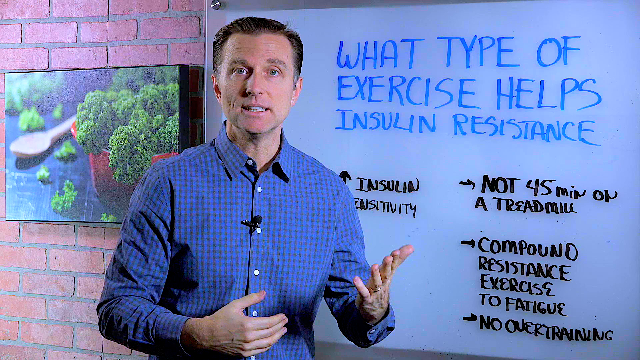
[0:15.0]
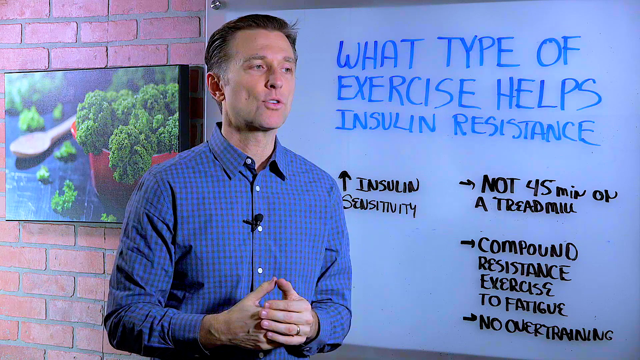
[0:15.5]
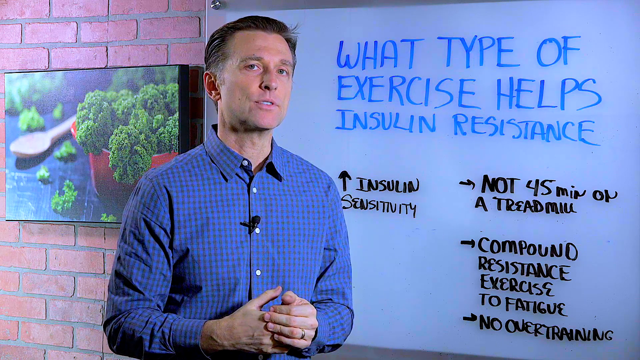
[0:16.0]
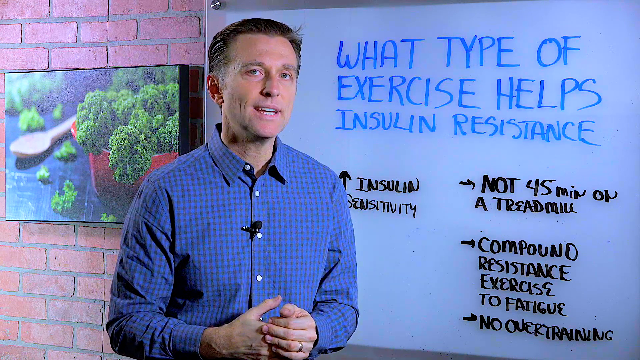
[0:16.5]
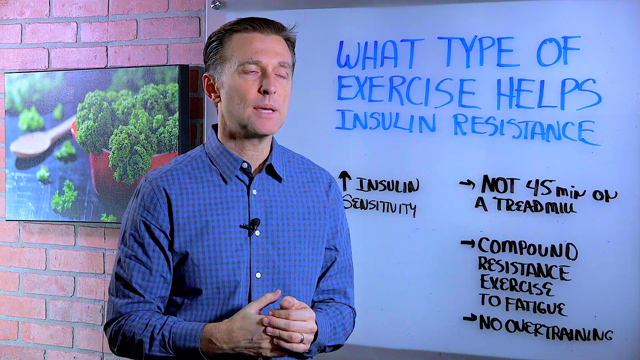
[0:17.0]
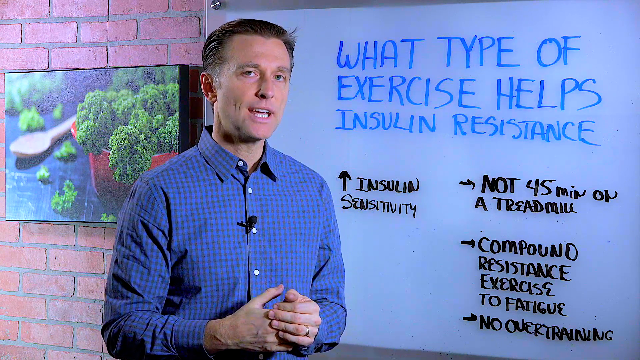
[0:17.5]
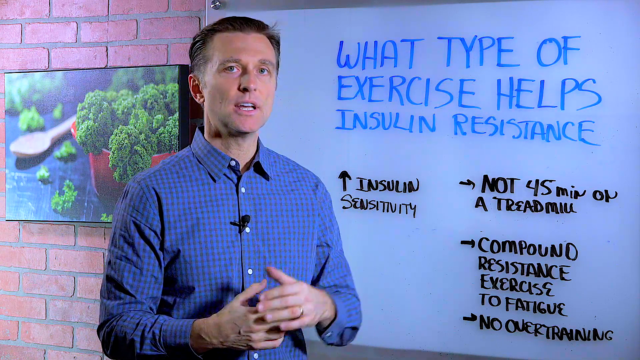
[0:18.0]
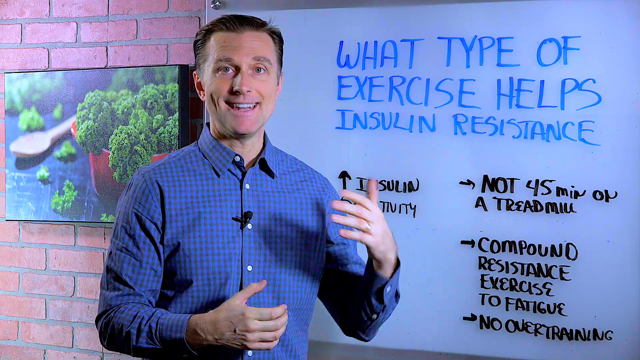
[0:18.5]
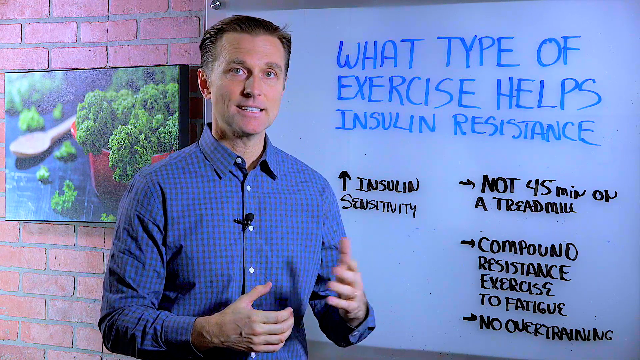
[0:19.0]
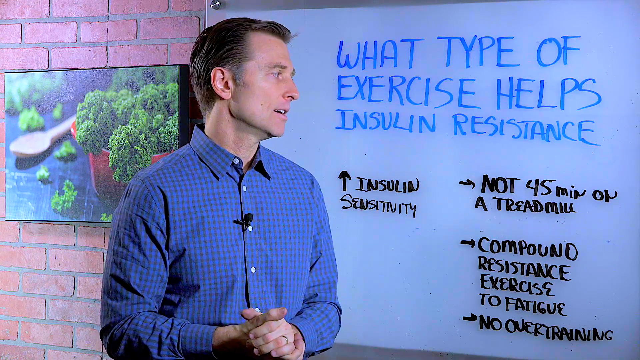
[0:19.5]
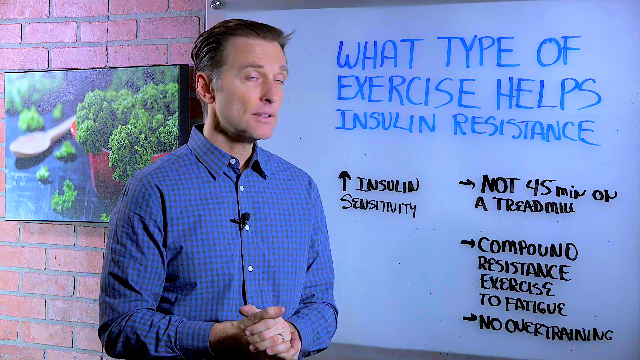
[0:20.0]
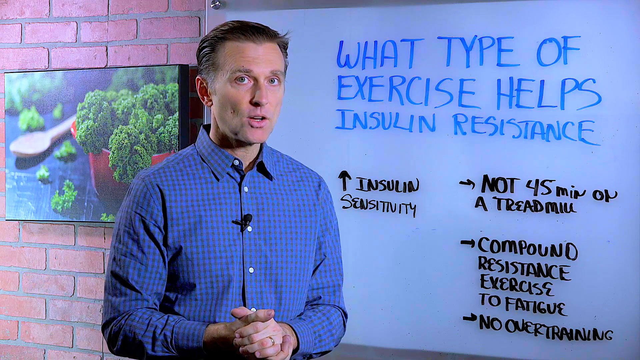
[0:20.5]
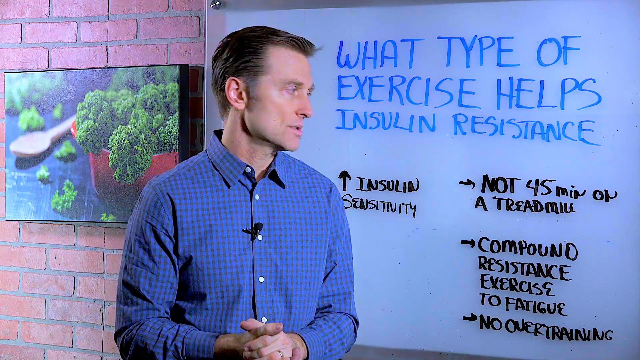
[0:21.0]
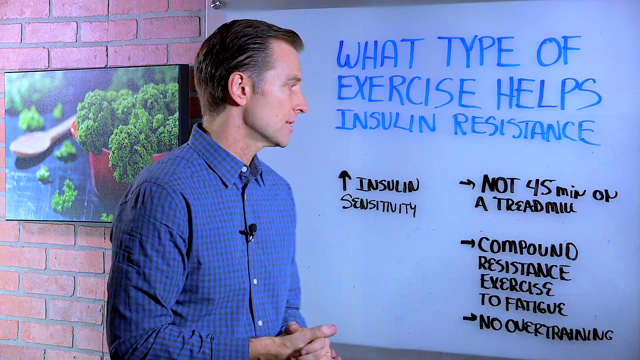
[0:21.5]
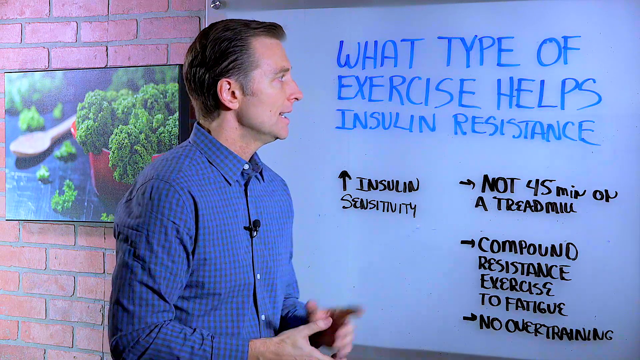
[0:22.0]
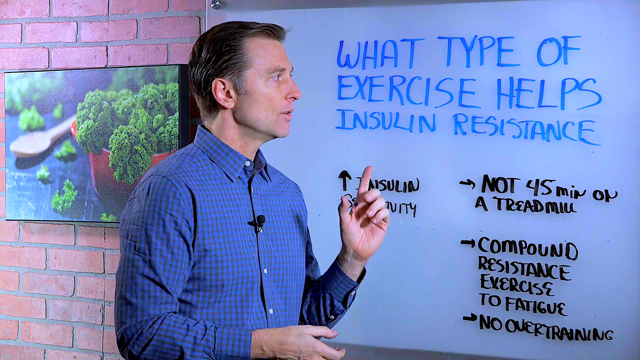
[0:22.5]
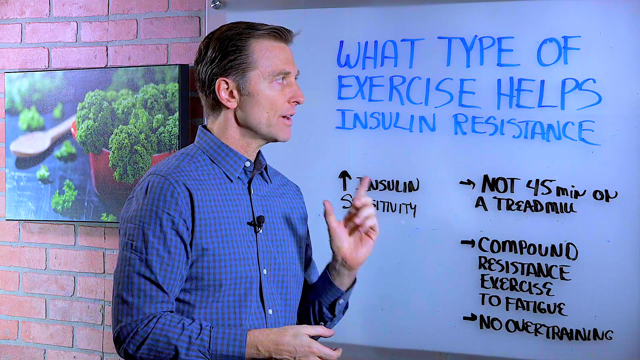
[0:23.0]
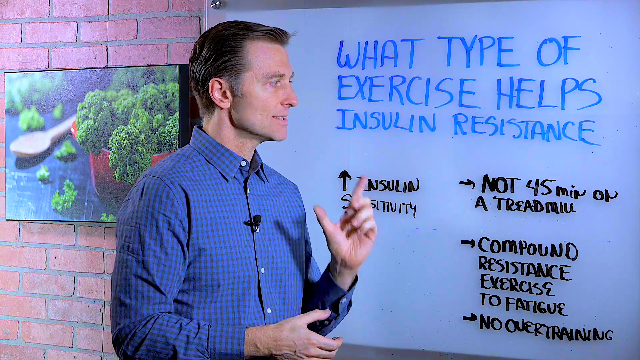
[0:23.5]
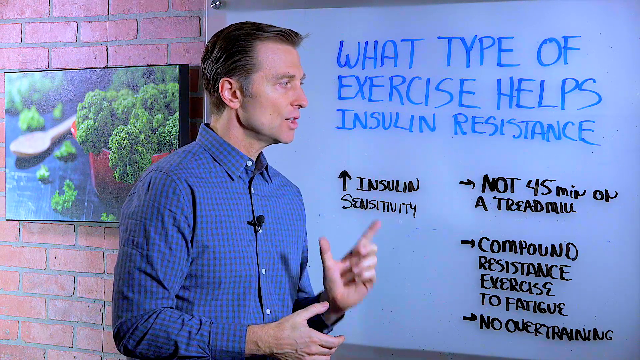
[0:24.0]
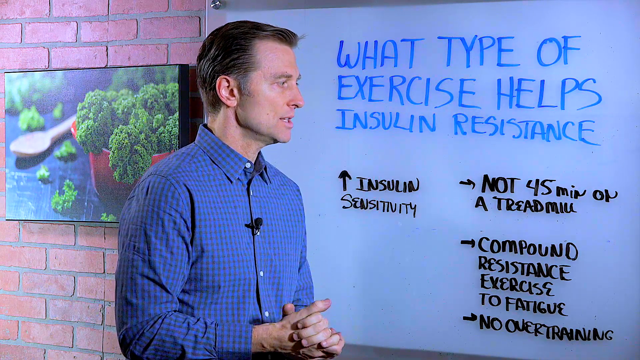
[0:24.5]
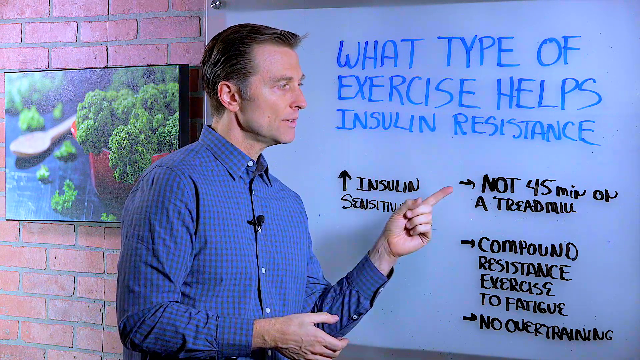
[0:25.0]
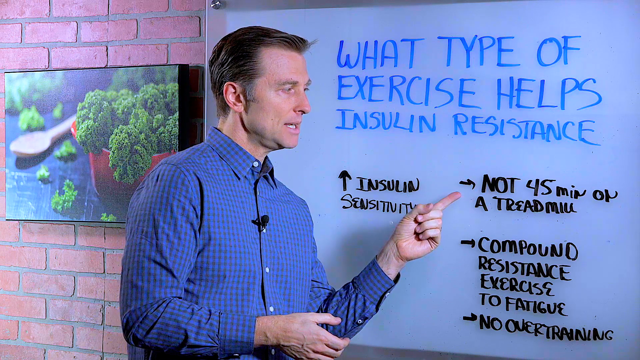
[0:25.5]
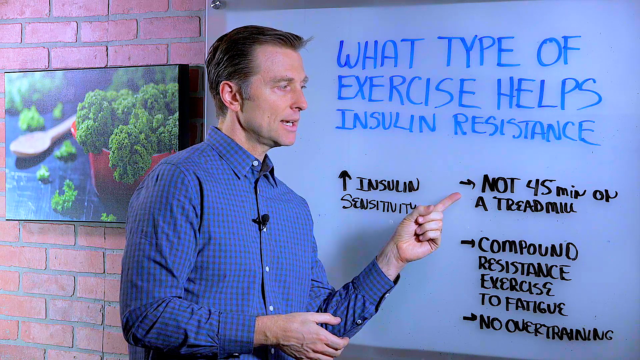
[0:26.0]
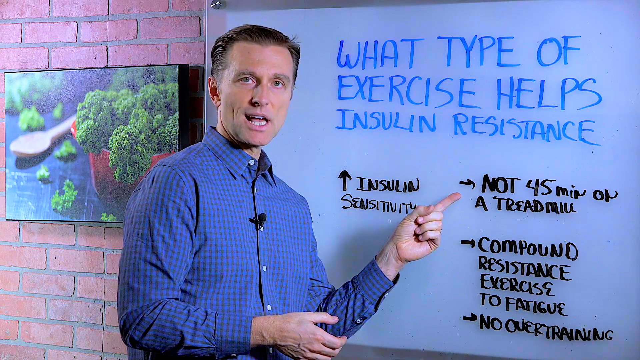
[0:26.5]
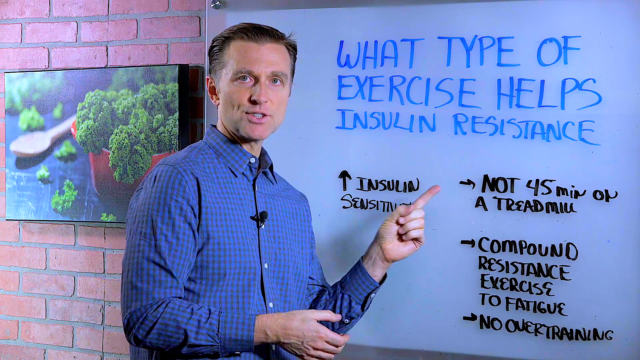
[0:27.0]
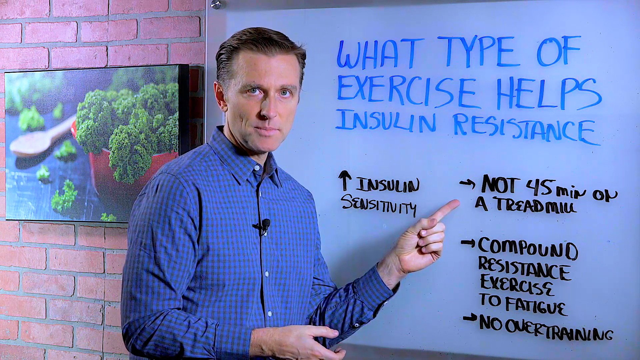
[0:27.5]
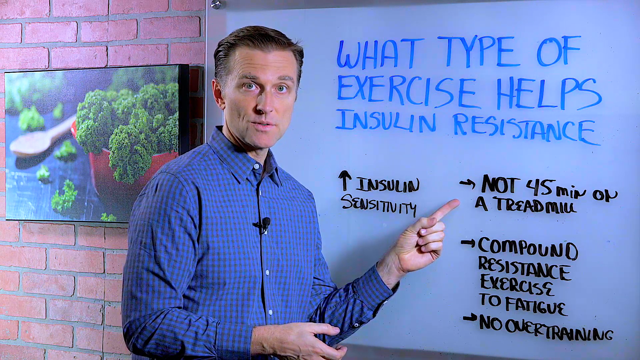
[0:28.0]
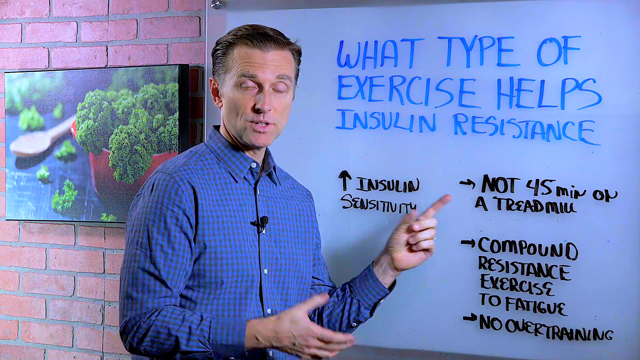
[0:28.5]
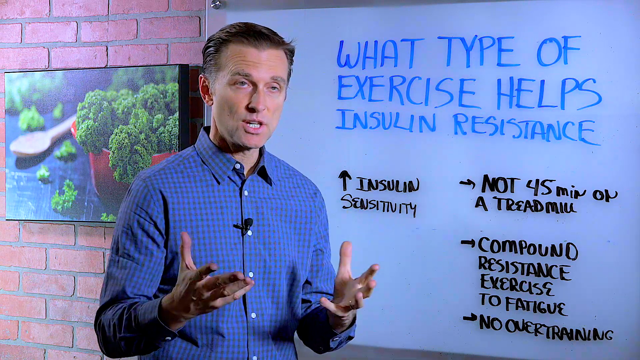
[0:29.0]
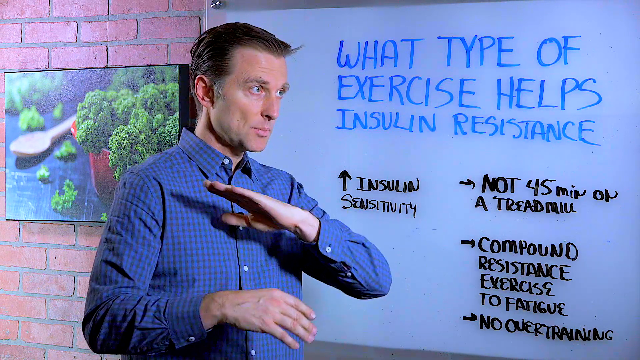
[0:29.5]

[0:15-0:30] The same man stands against the same wall. He moves his hand across the screen and focuses on specific parts of the whiteboard, apparently the point that it's not 45 minutes of exercise on a treadmill, pointing to that point on the board over and over. The whiteboard is attached to a brick wall, and in the background there is a picture of salad in a bowl: some lettuce in a red bowl with a wooden spoon. He uses his hands a lot and wears a buttoned-up, collared, blue plaid shirt with white stripes.